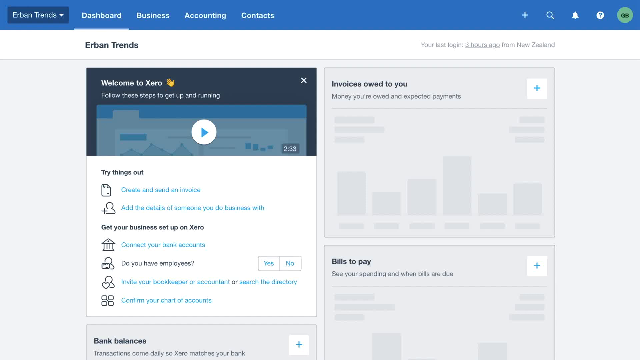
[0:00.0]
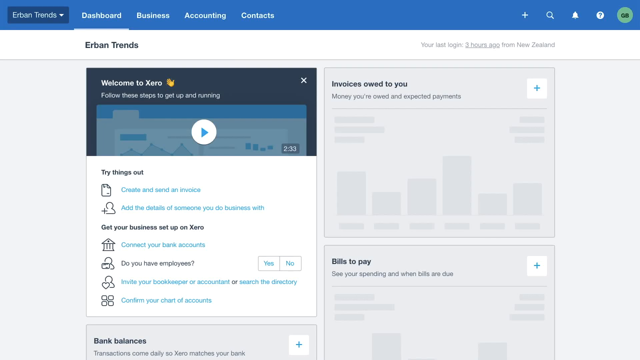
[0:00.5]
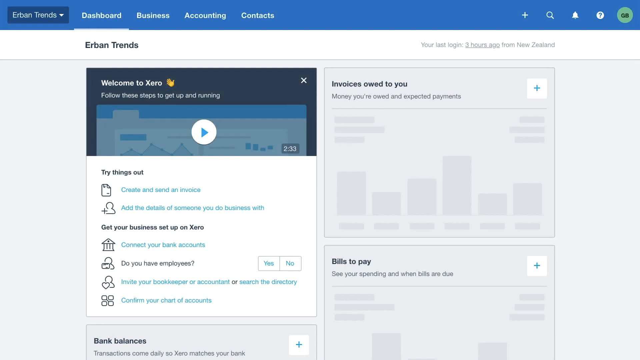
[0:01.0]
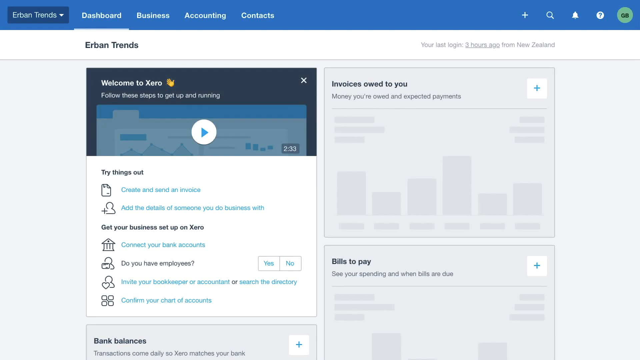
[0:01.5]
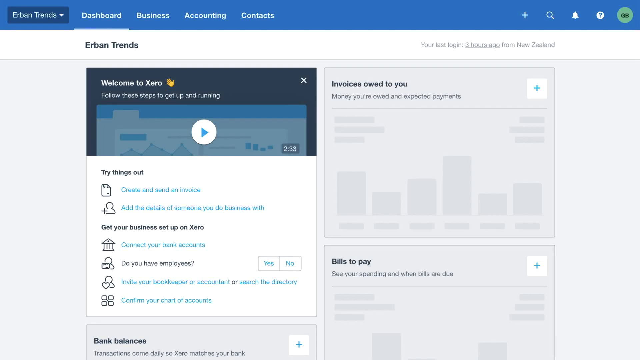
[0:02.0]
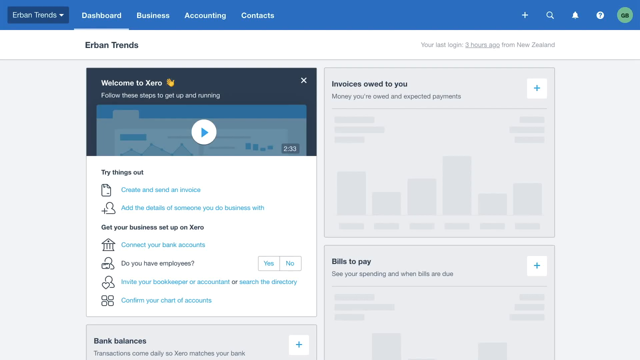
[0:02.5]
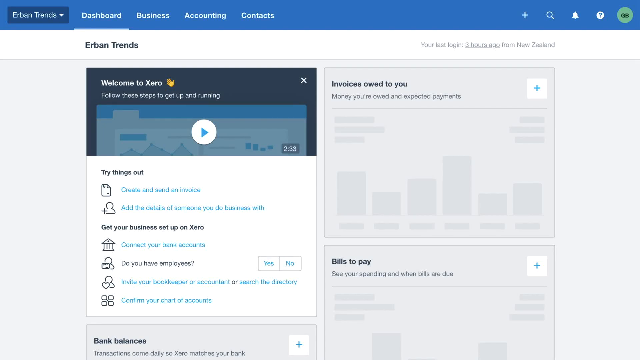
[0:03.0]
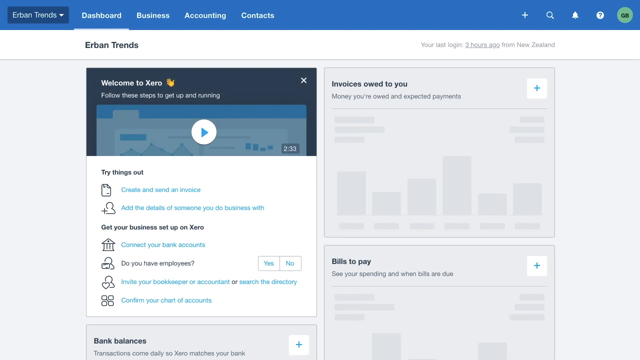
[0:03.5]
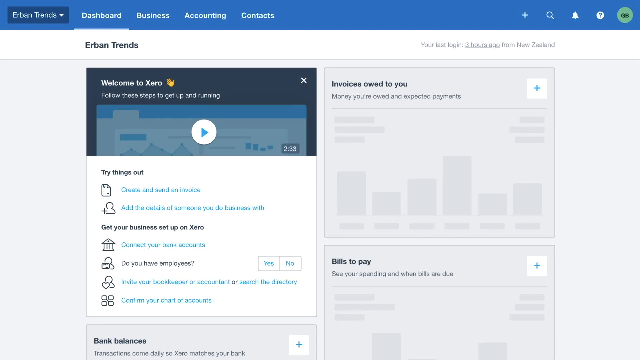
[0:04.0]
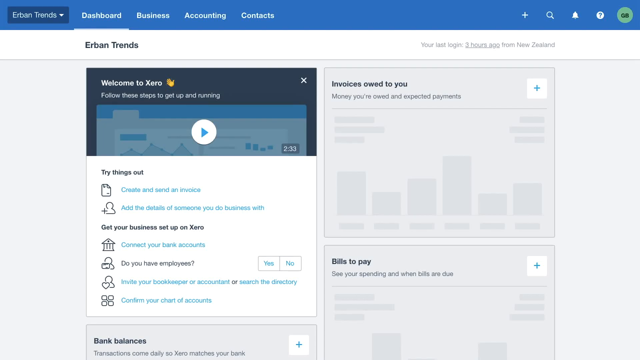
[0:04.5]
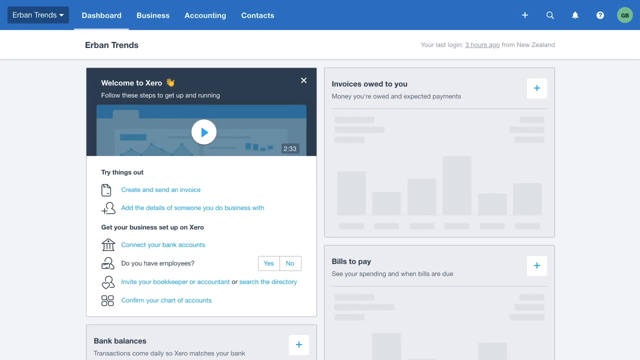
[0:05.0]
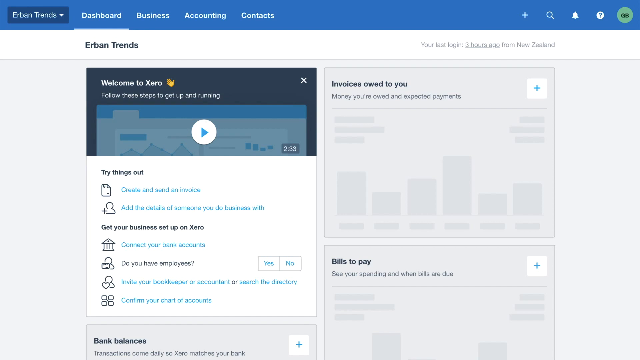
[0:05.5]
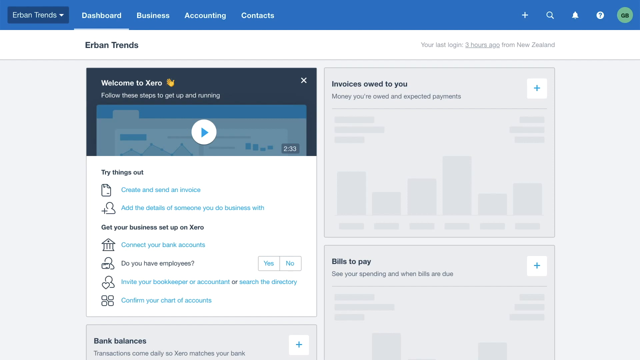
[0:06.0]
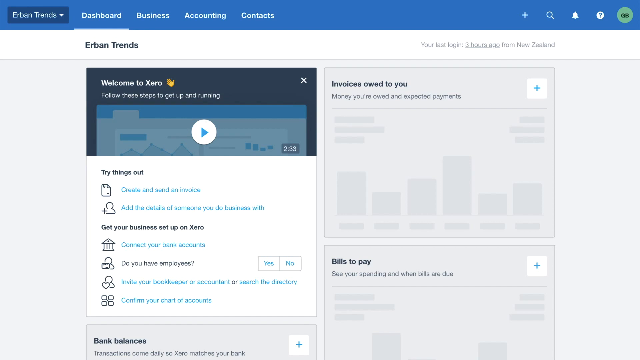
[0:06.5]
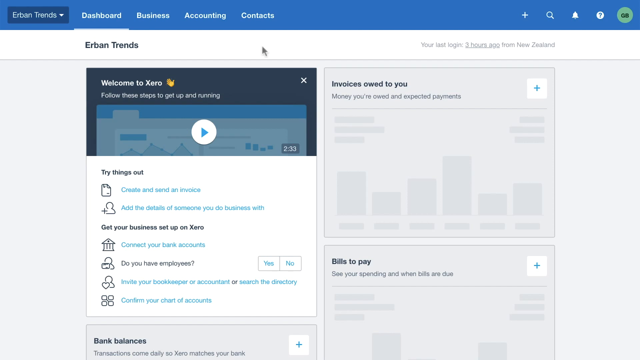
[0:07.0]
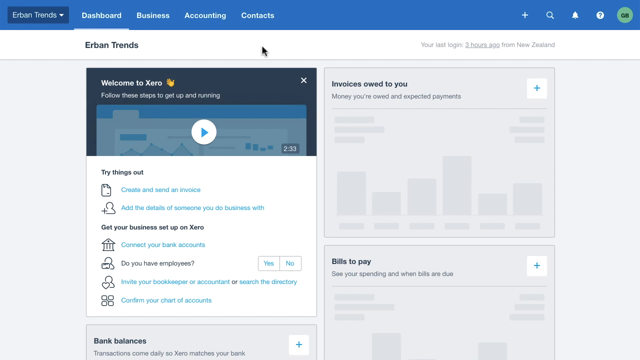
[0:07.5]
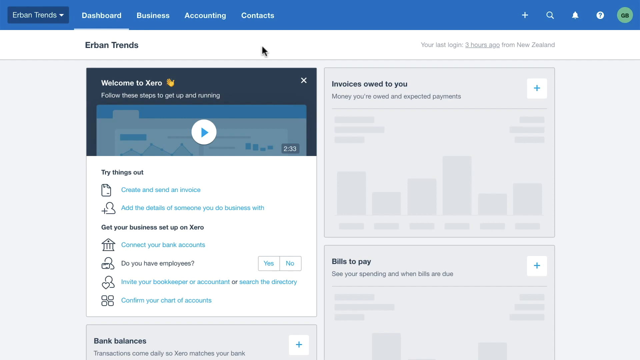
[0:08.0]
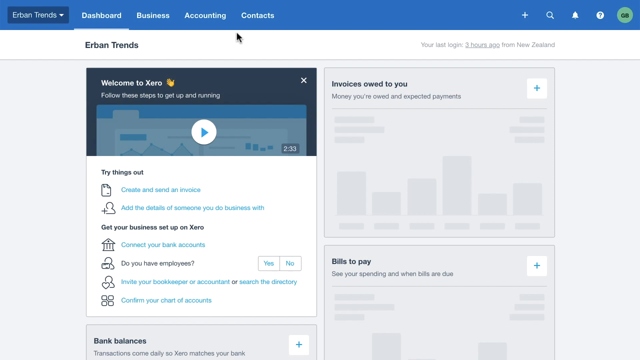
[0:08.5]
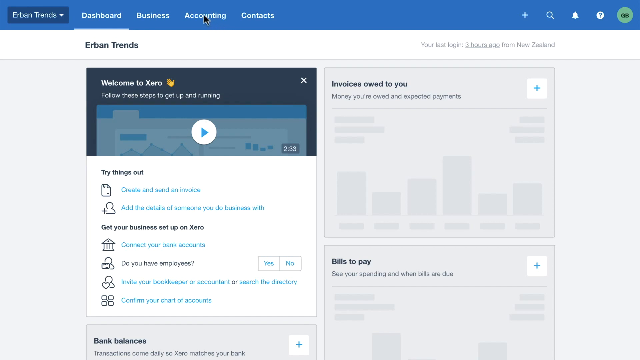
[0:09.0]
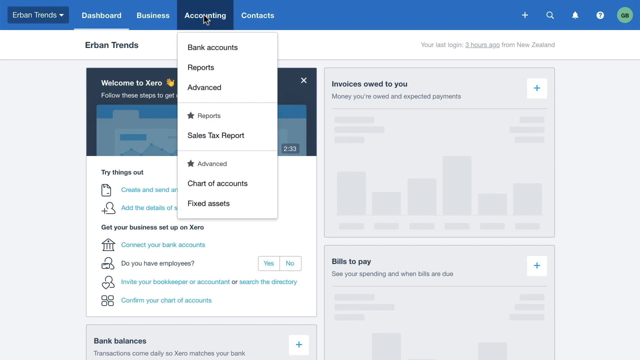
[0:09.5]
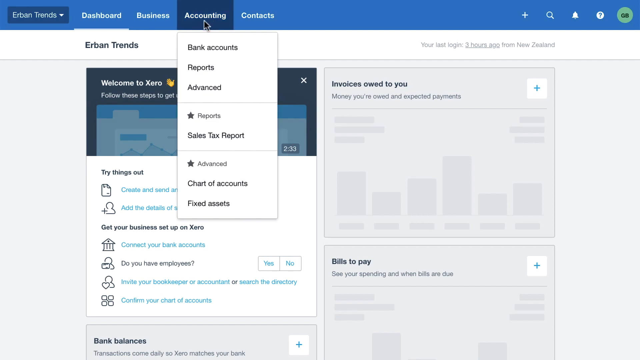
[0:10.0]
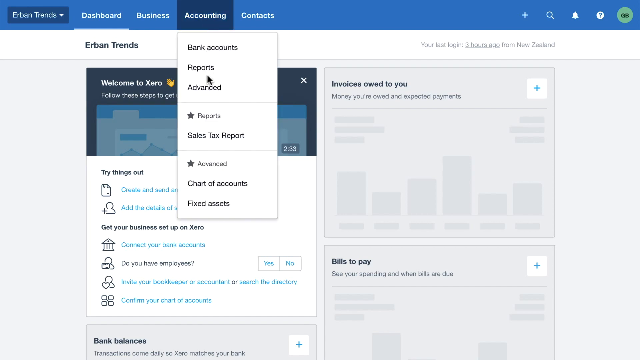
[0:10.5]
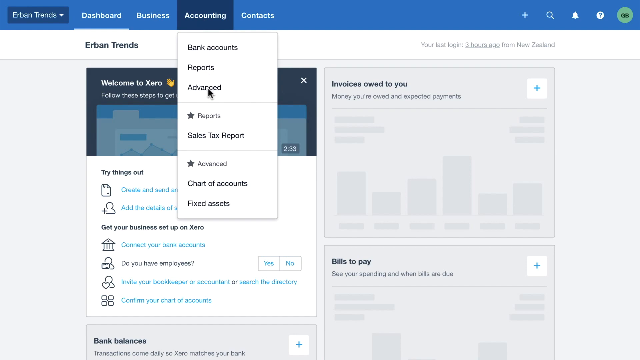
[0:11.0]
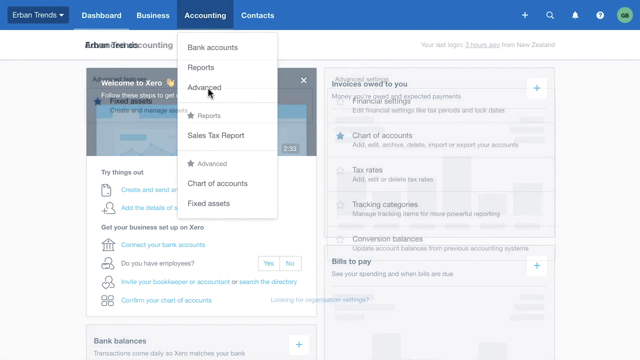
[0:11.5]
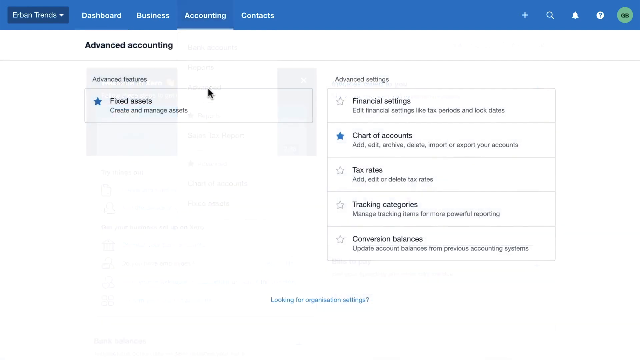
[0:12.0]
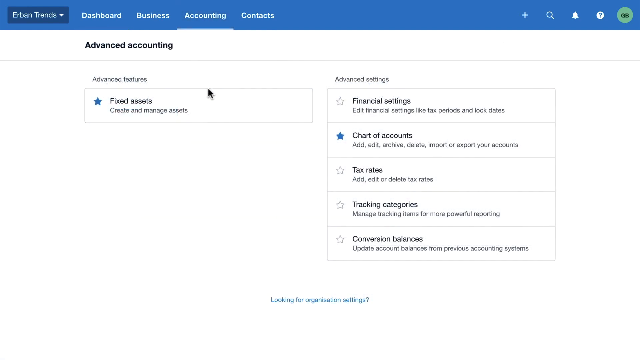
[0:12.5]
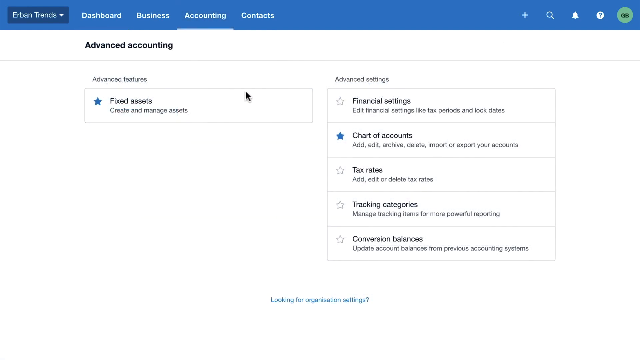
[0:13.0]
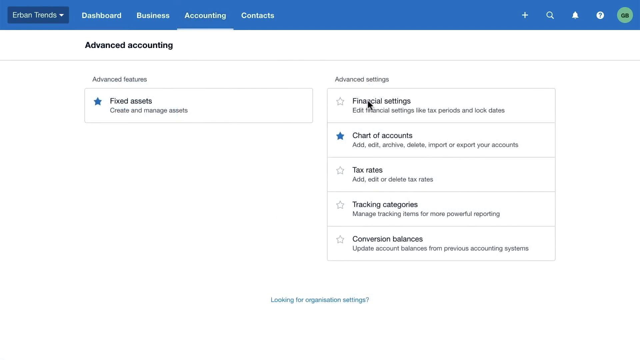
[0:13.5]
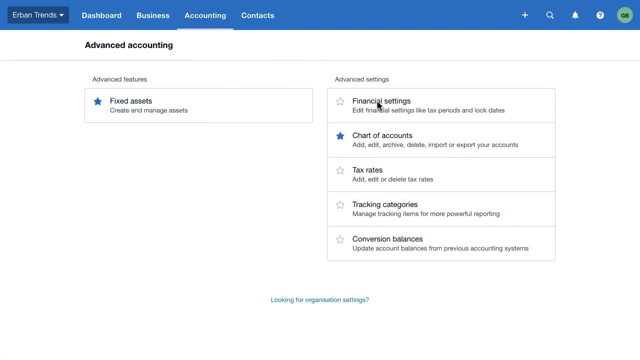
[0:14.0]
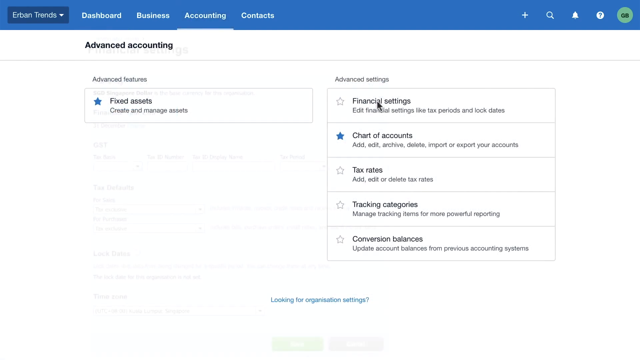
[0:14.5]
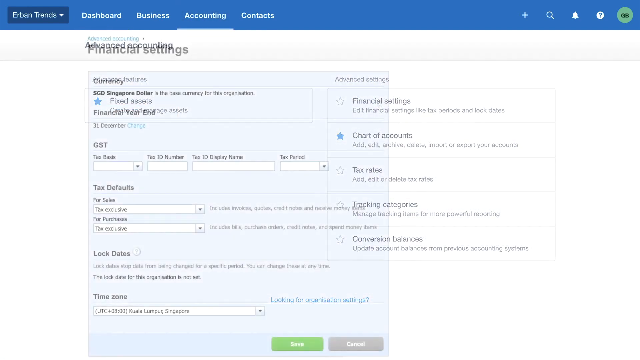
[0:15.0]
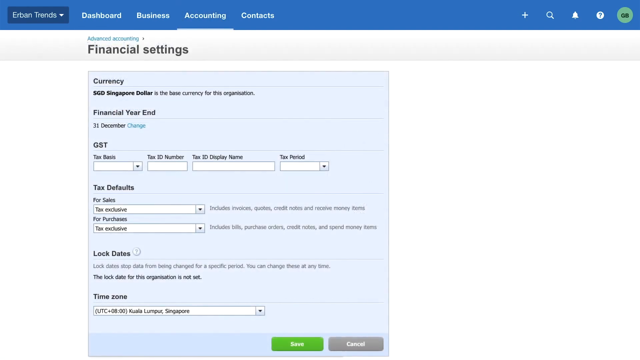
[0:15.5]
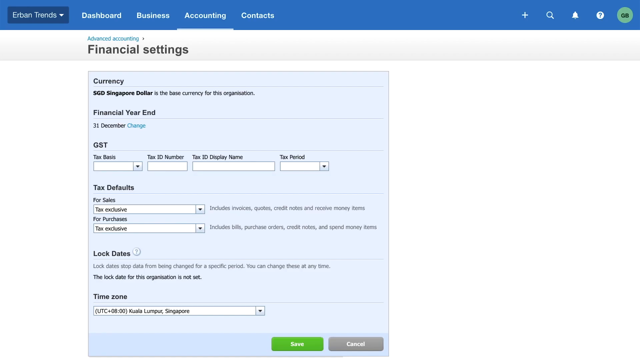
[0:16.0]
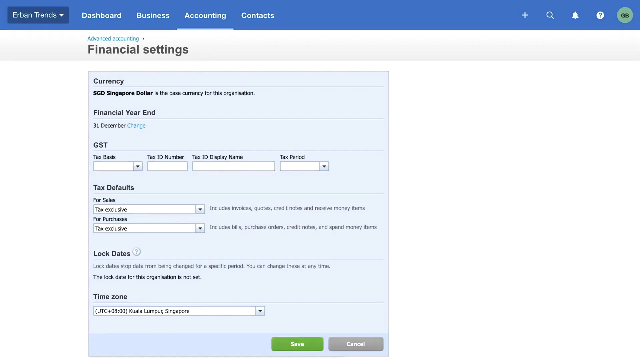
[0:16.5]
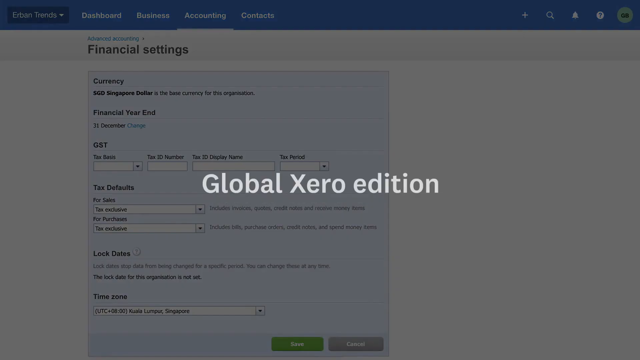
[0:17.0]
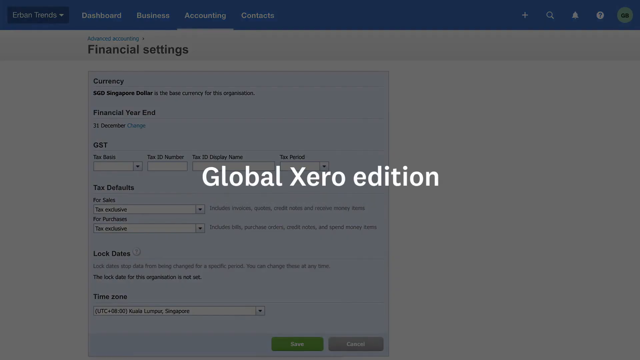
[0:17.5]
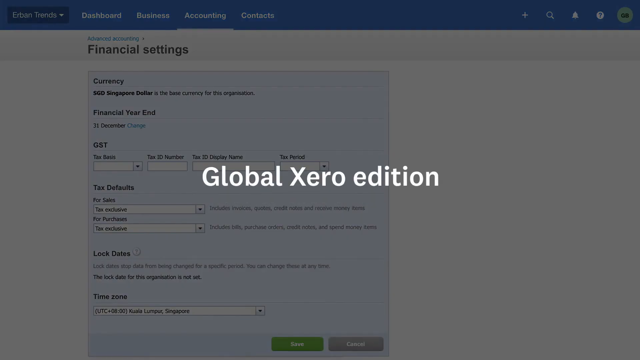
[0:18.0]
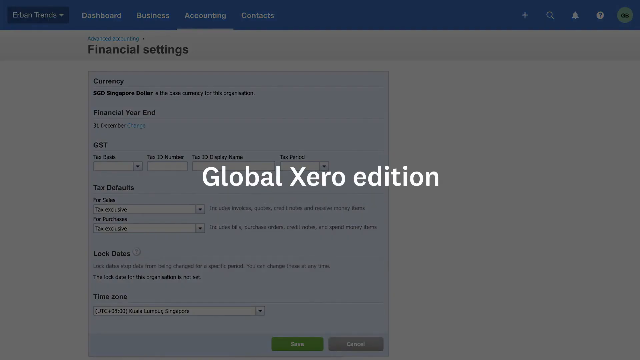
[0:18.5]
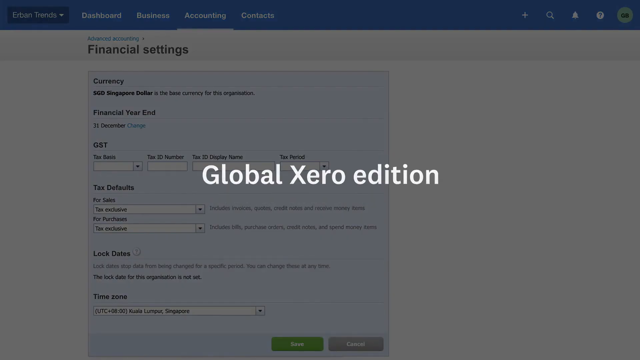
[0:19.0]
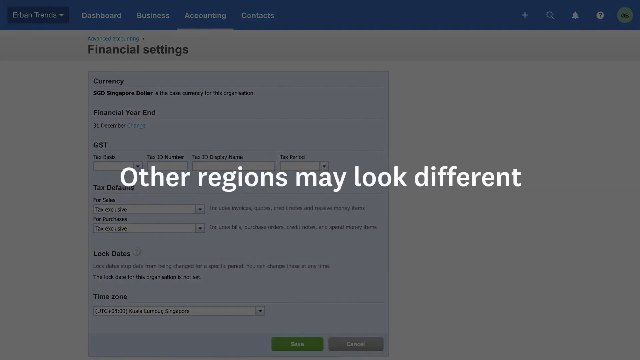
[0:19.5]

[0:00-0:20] A computer screen shows text at the top reading "Erban Trends" along with the tabs "Dashboard," "Business," "Accounting" and "Contacts." The page reads "Welcome to Xero" and has a play button for a video, "try things out," and "create and send an invoice," along with other details such as "invoices owed to you" and "bills to pay." Someone clicks on Accounting, goes to the Advanced tab, and then clicks on Financial Assets. This is a Xero software suite for accounting or business practices; it looks like a business tool that might connect to a bank and allows various things such as financial settings. The currency is Singaporean, and tax settings can be changed. The screen is then grayed out so the background is somewhat opaque, with an overlay of white text reading "Global Xero Edition" and "Other regions may look different."